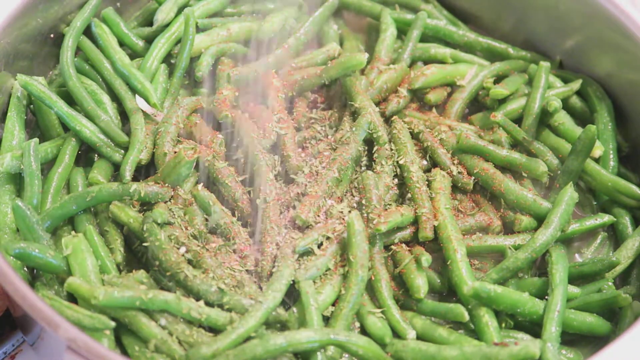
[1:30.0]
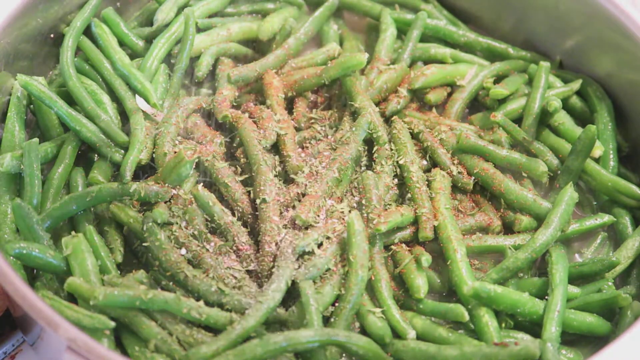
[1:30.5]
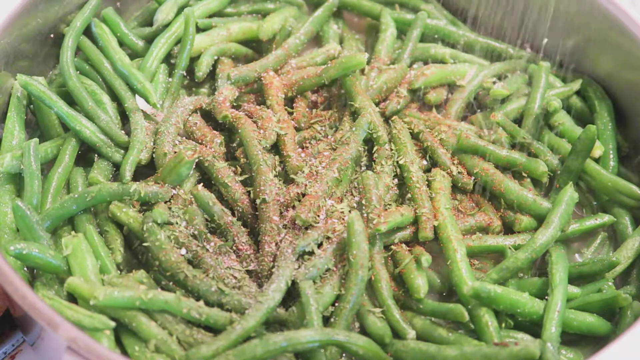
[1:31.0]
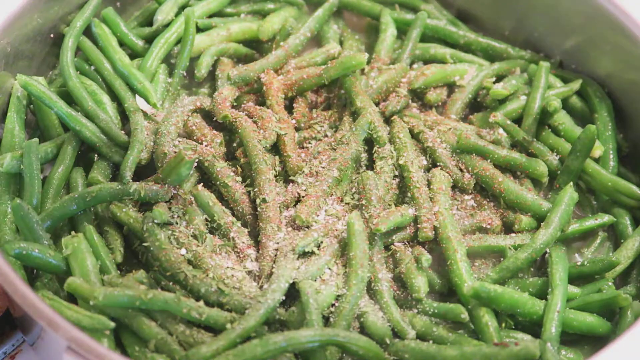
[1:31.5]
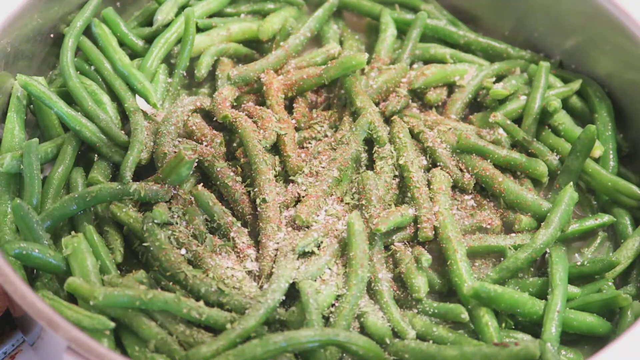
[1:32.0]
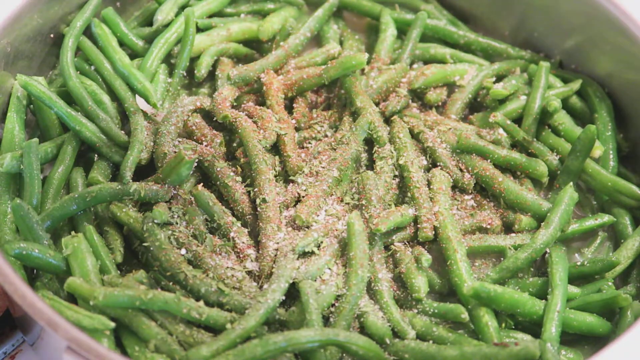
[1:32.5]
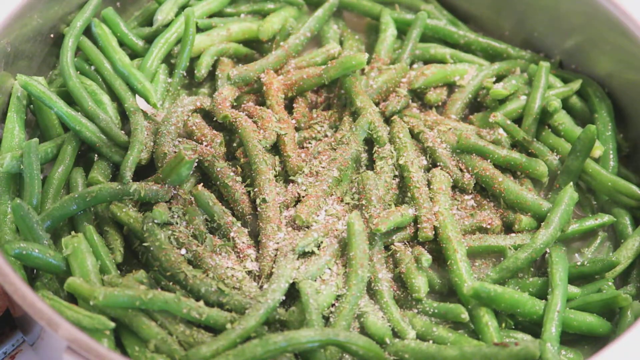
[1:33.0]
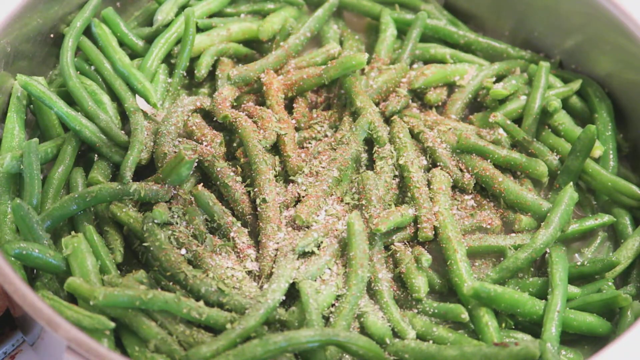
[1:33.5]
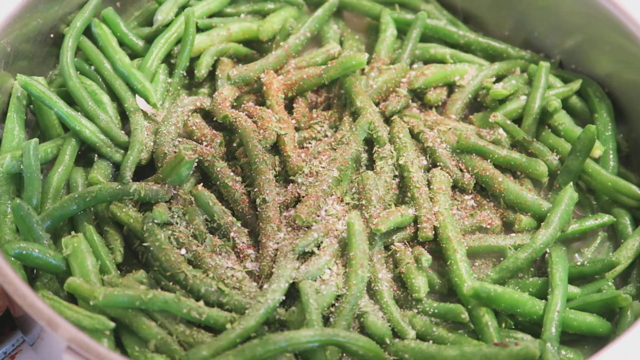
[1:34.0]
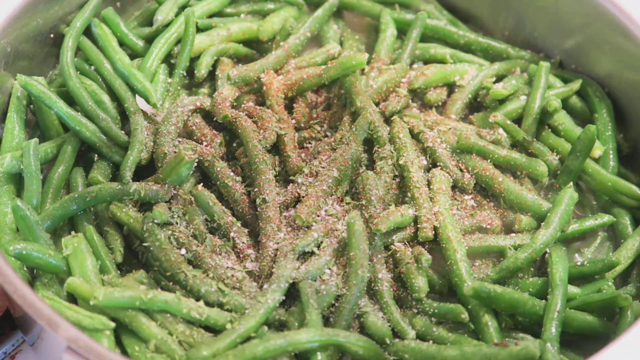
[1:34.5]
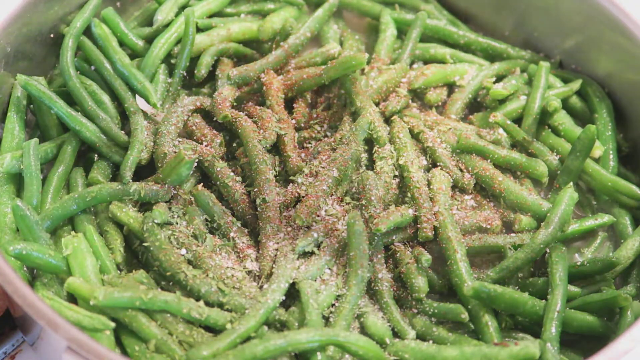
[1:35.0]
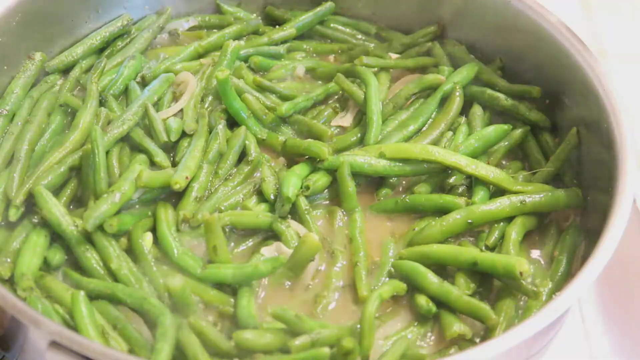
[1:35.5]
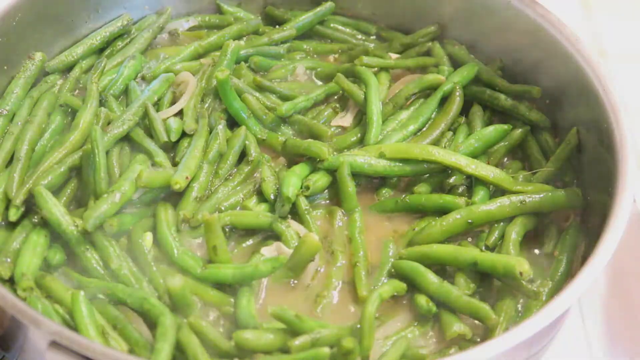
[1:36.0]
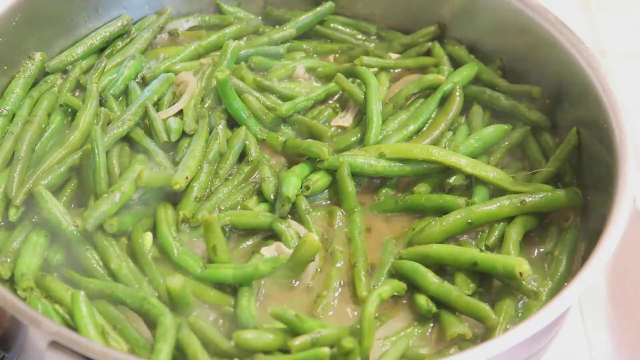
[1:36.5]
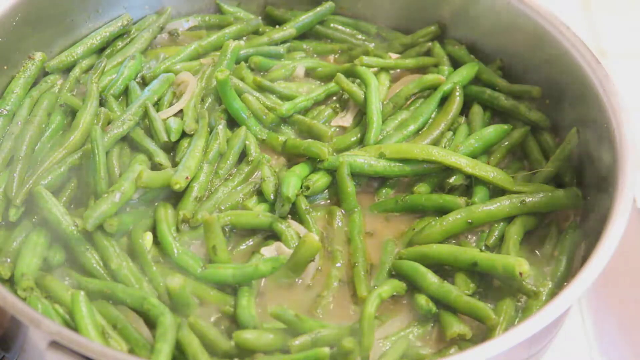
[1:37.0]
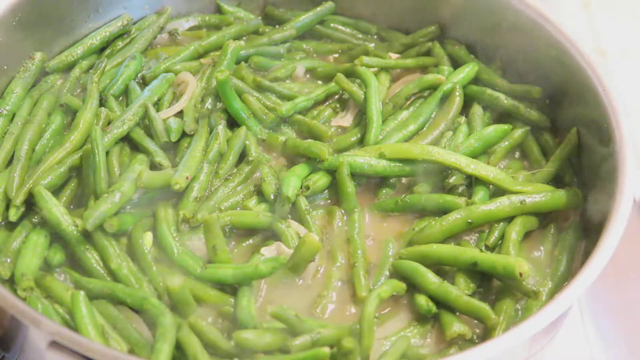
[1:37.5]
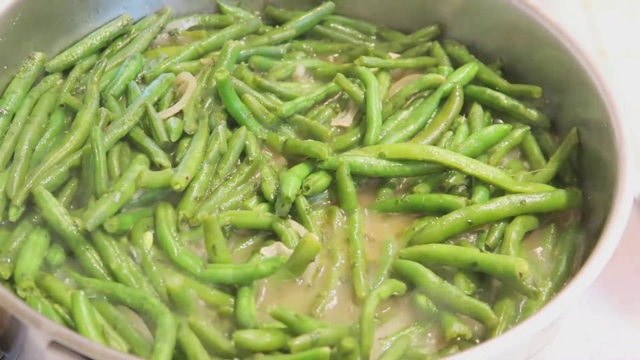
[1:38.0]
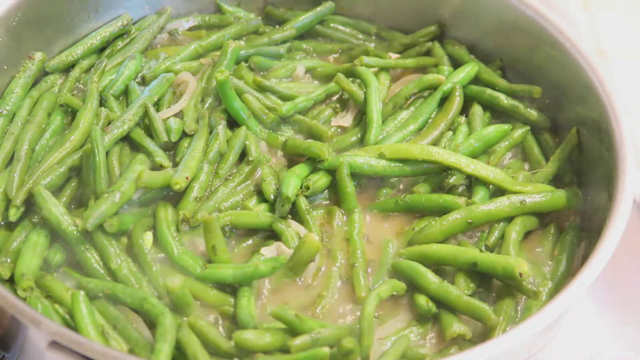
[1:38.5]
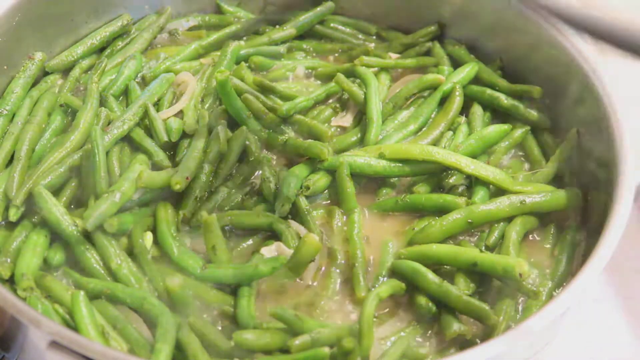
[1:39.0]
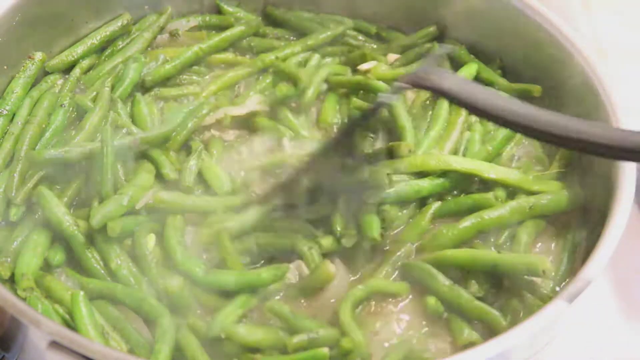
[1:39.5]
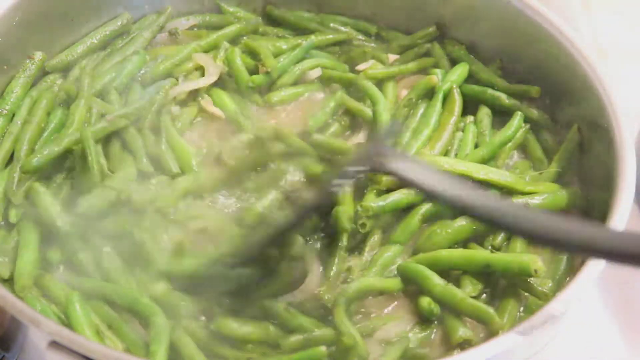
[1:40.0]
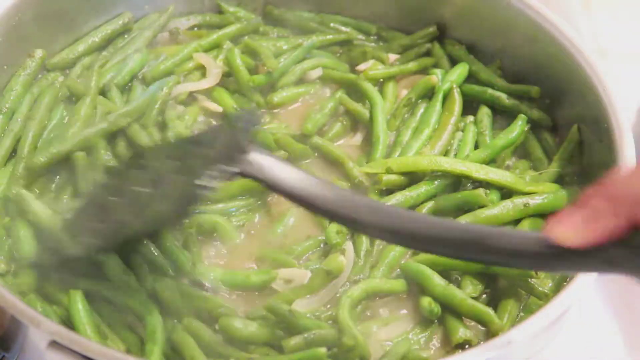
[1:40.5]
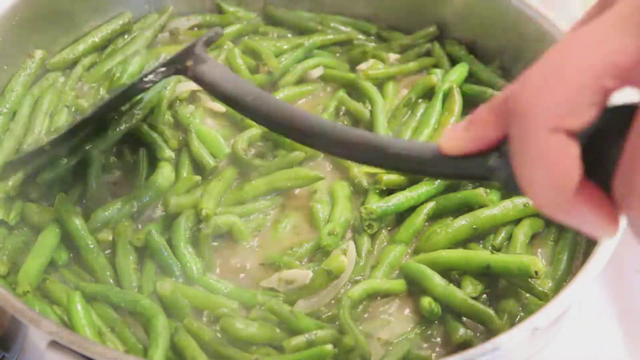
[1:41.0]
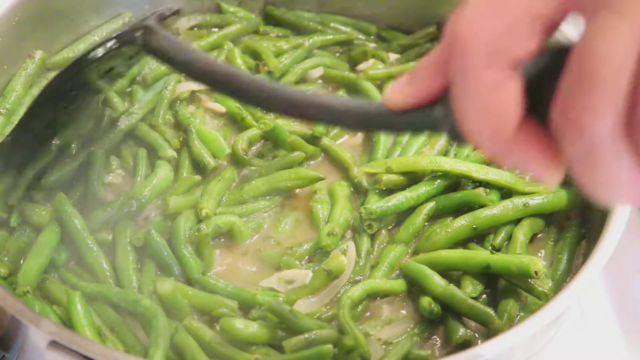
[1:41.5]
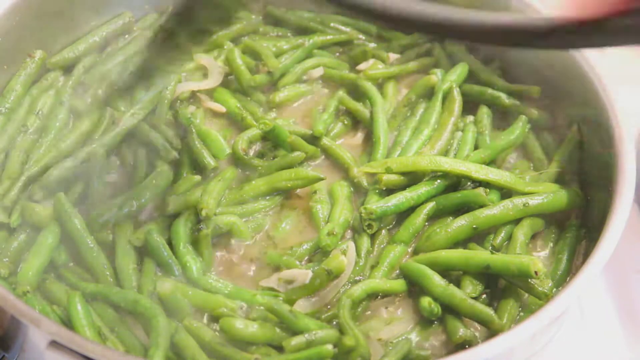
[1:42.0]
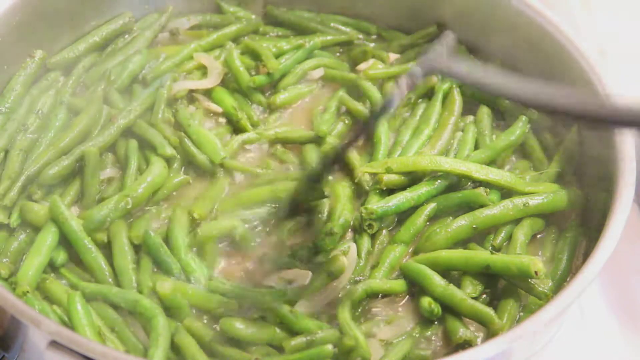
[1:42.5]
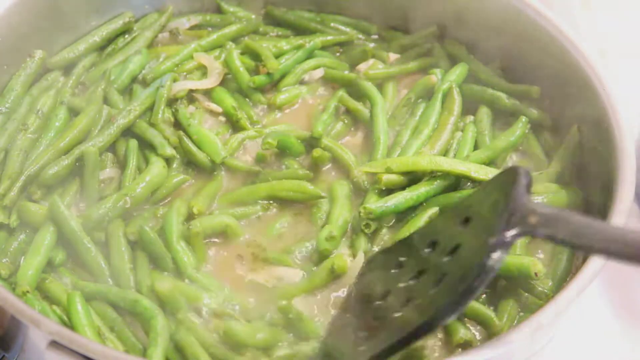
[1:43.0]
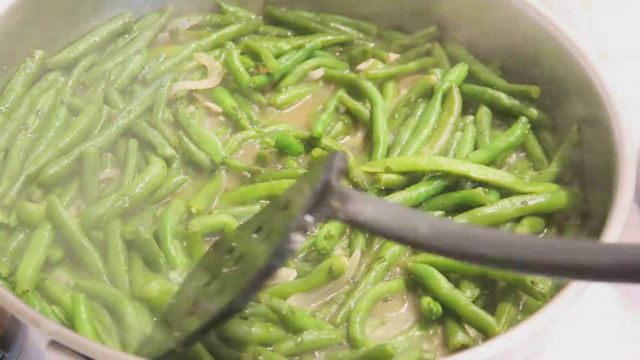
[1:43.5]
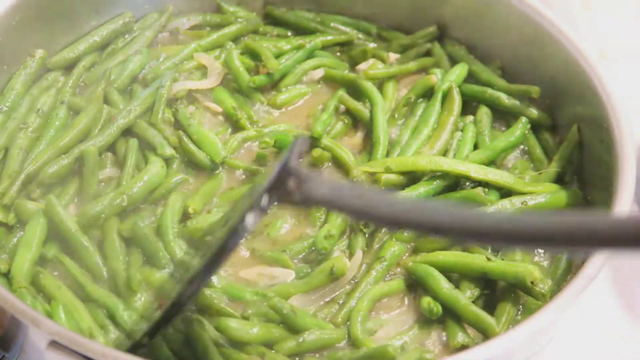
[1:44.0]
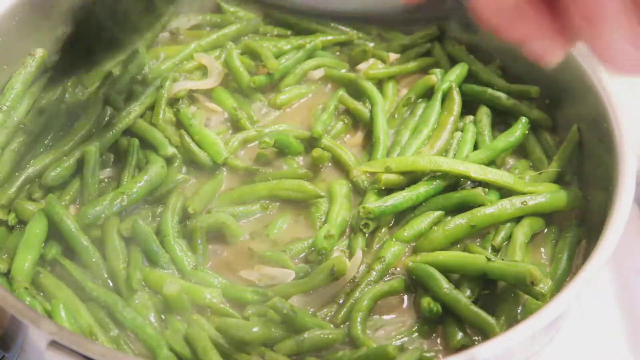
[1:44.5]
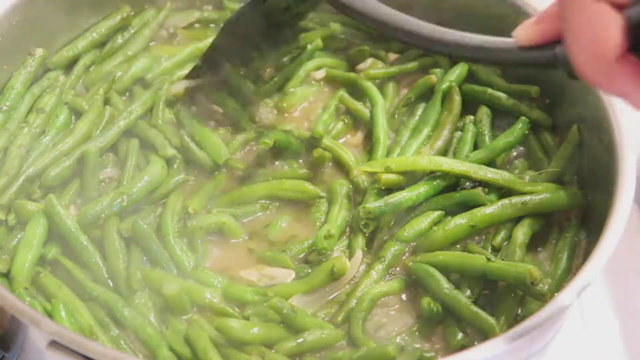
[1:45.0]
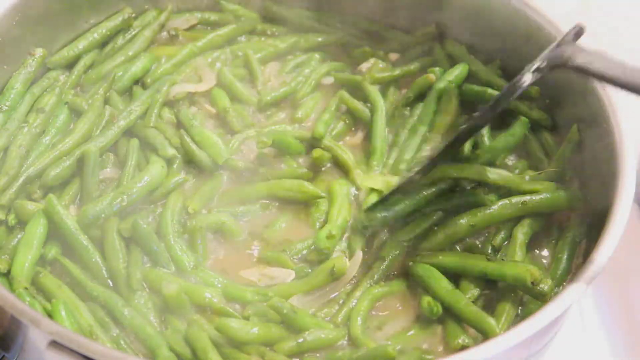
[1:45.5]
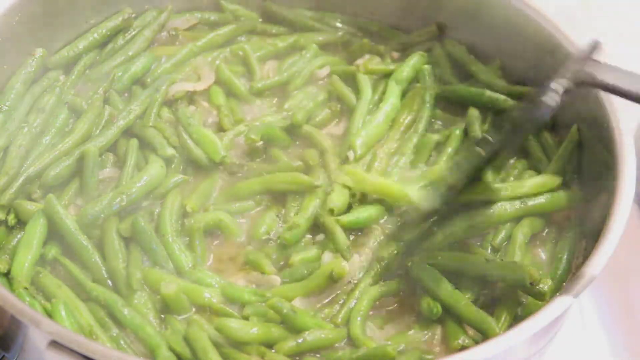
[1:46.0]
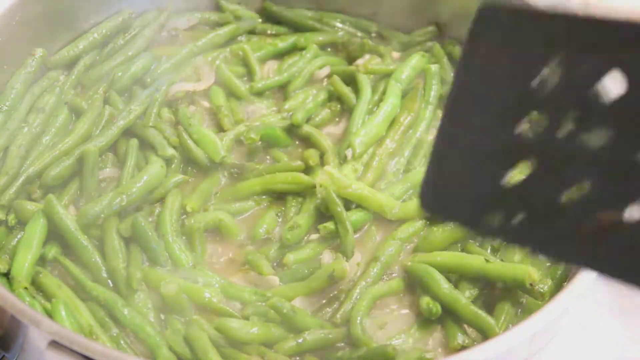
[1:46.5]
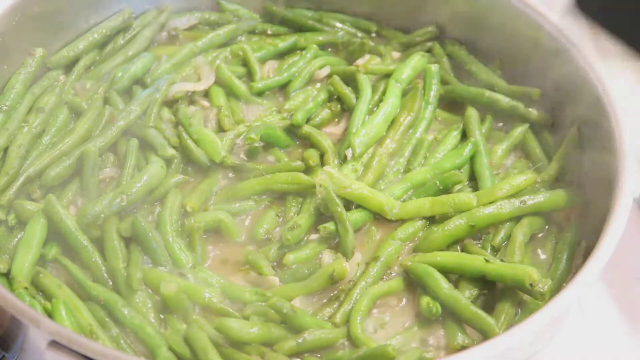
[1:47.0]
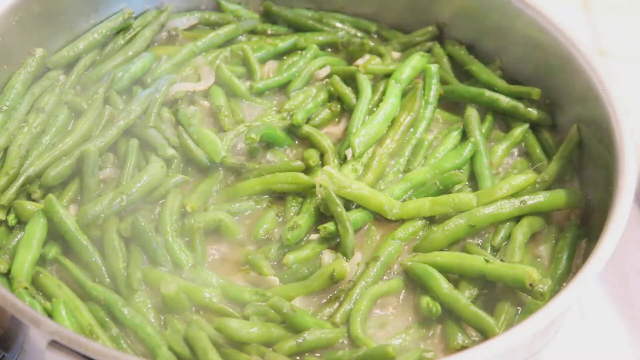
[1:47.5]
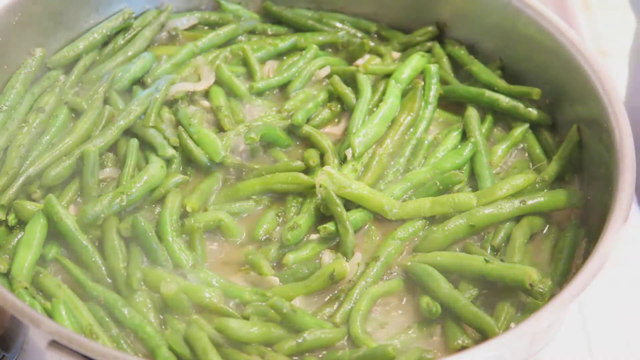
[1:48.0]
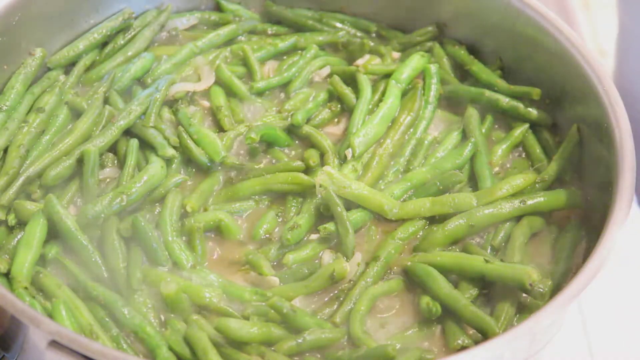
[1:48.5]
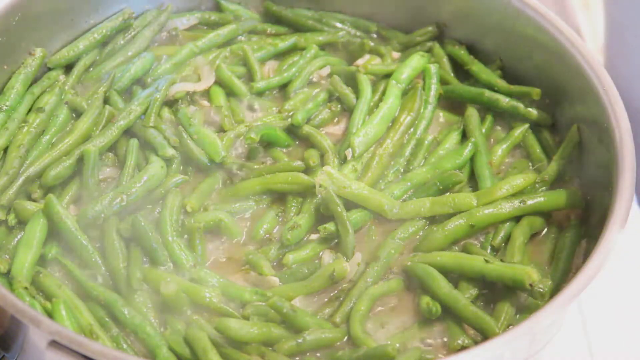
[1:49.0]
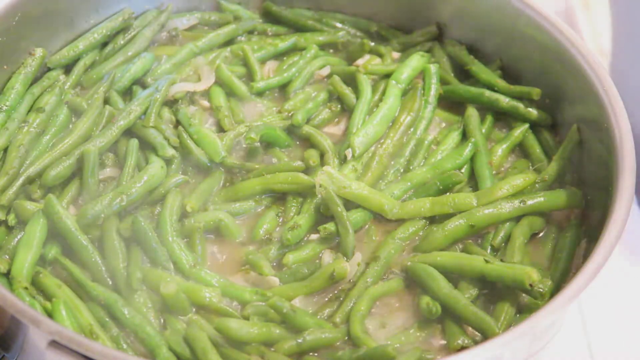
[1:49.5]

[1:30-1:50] After the frozen green beans are added, hands spread them out in the pan. Something like coconut is added along with water, and spices and salt are also added to the pan with the frozen green beans.